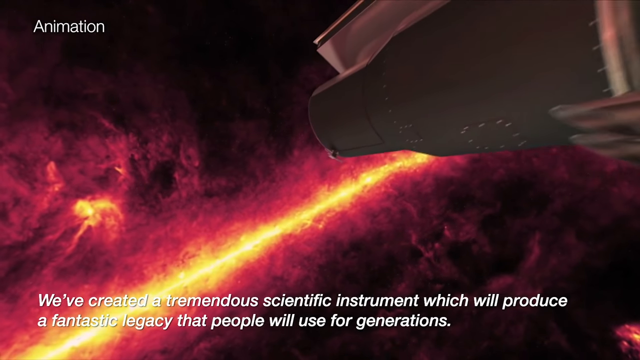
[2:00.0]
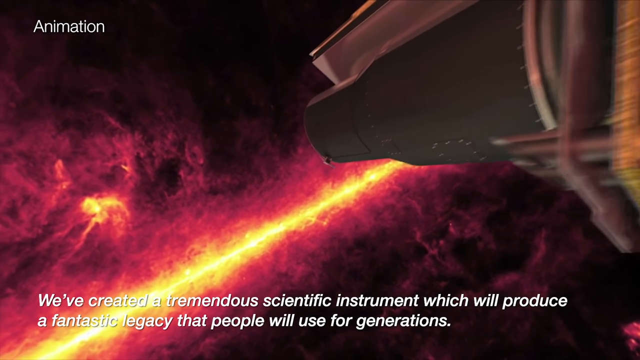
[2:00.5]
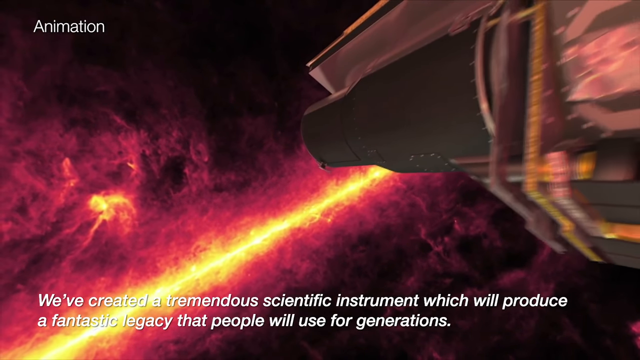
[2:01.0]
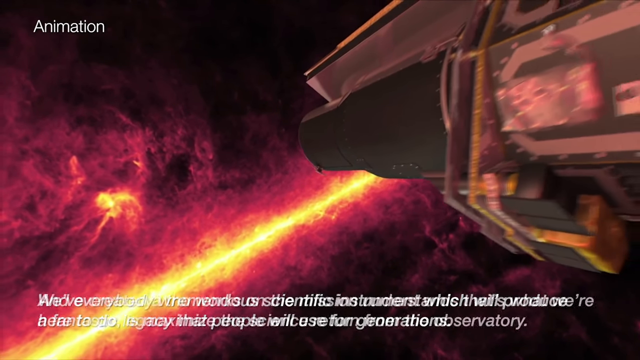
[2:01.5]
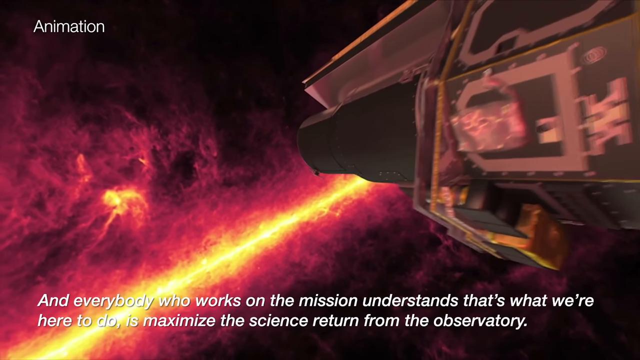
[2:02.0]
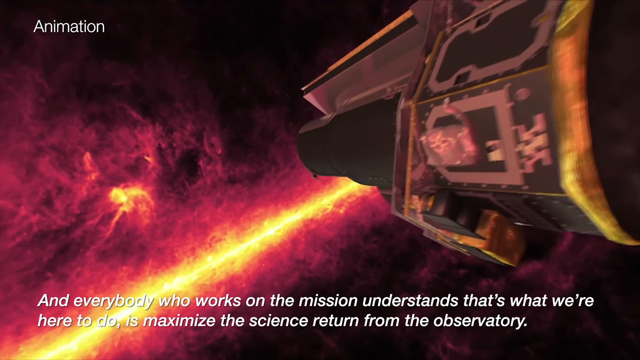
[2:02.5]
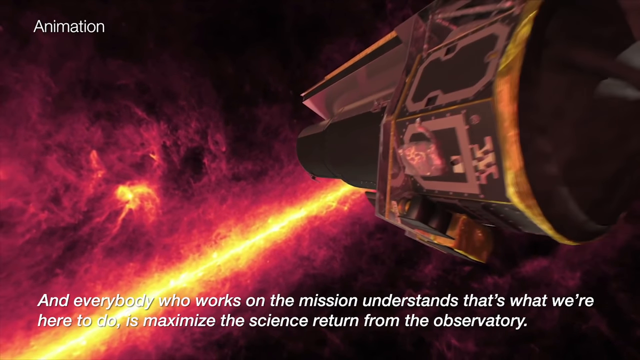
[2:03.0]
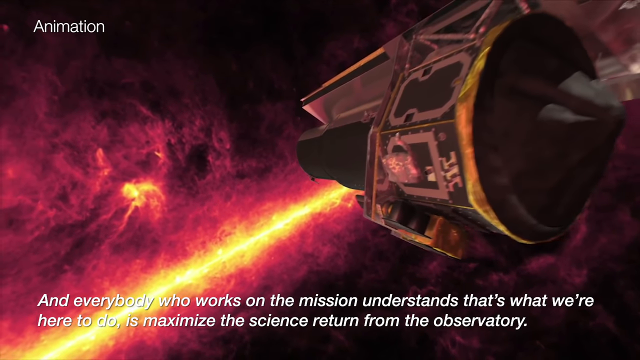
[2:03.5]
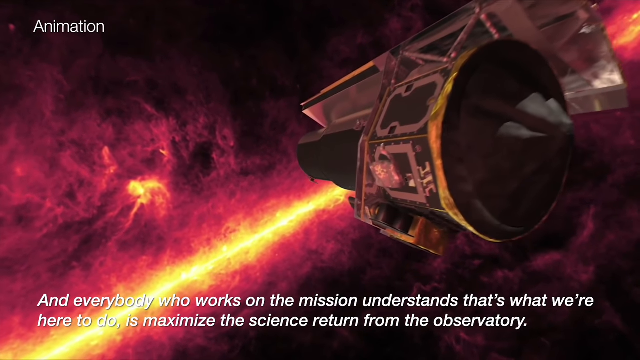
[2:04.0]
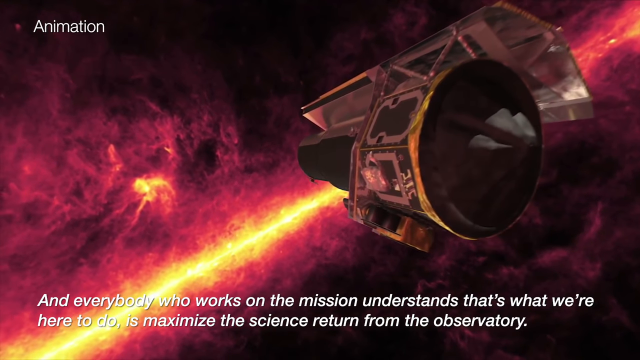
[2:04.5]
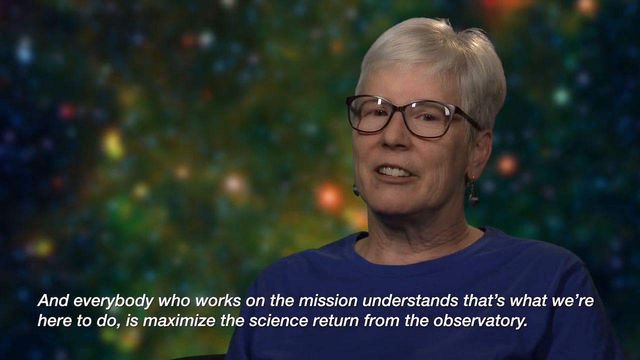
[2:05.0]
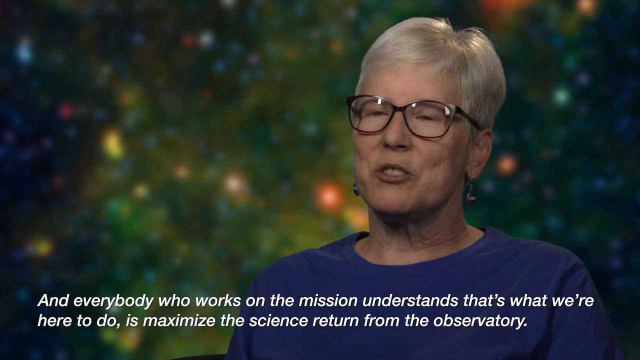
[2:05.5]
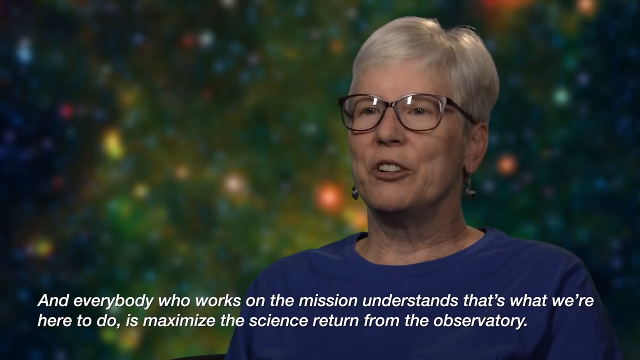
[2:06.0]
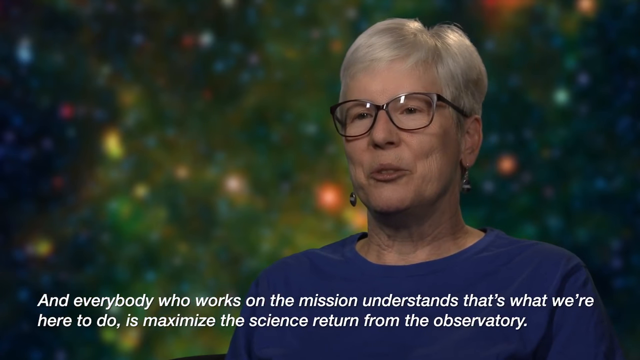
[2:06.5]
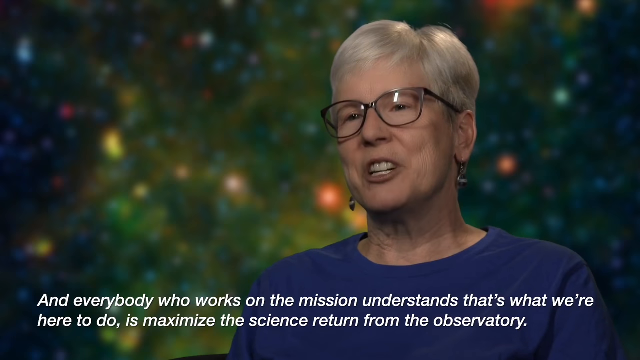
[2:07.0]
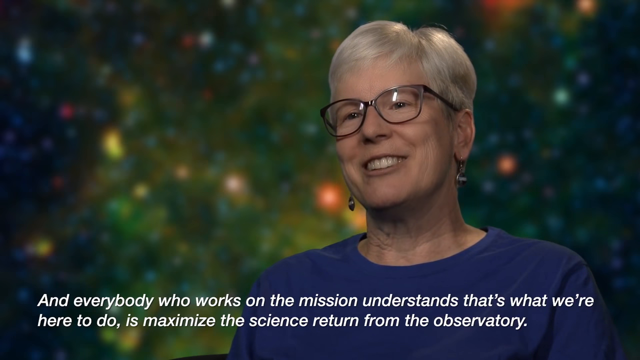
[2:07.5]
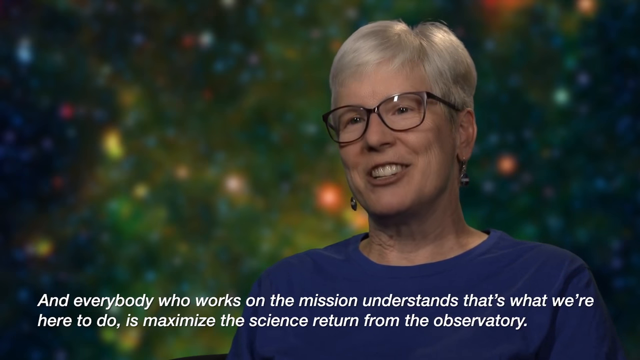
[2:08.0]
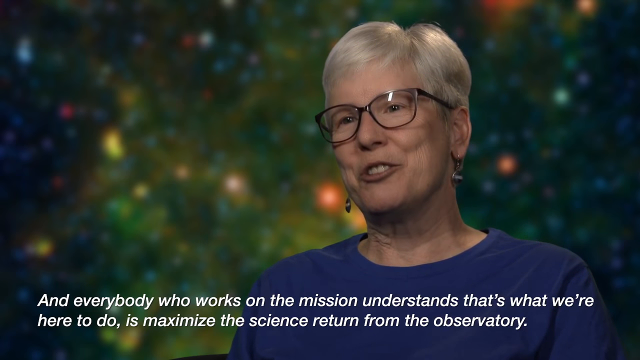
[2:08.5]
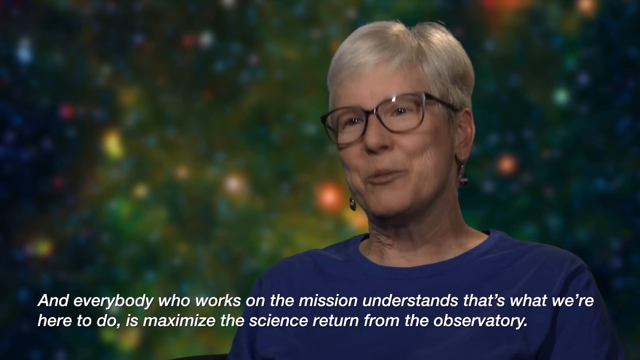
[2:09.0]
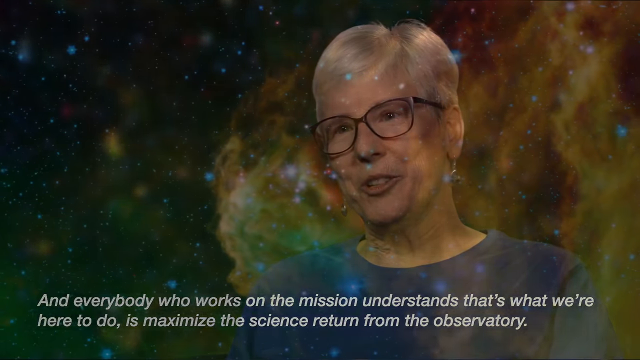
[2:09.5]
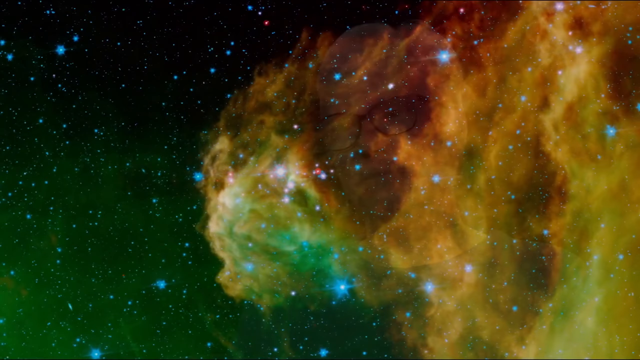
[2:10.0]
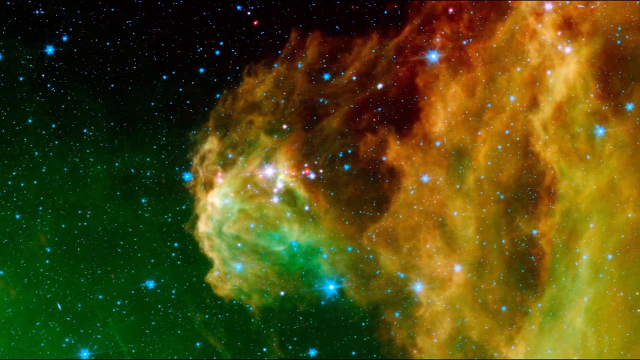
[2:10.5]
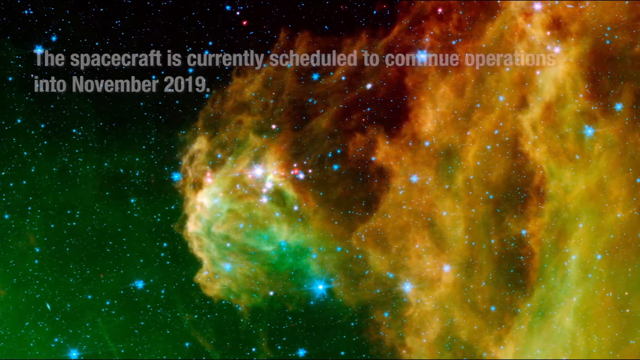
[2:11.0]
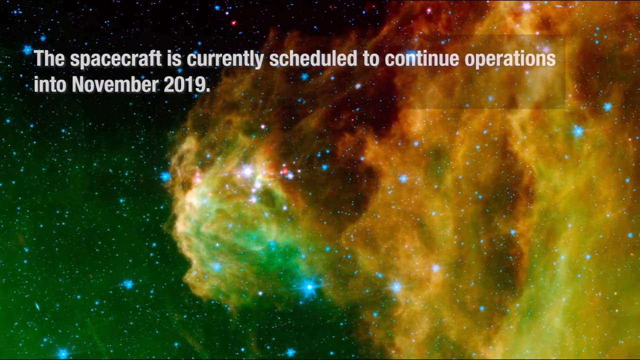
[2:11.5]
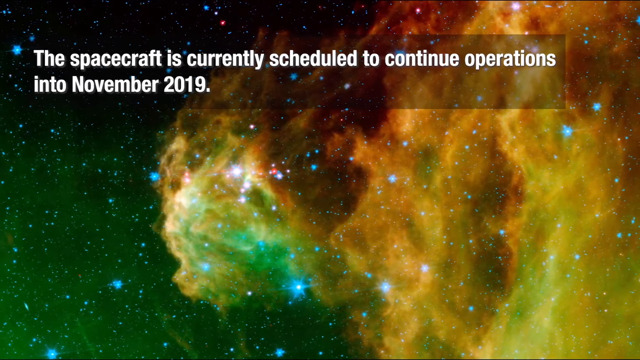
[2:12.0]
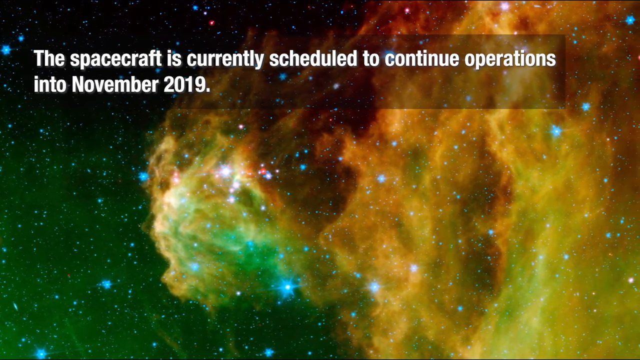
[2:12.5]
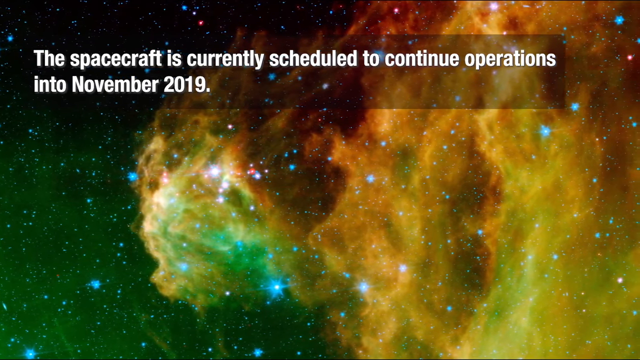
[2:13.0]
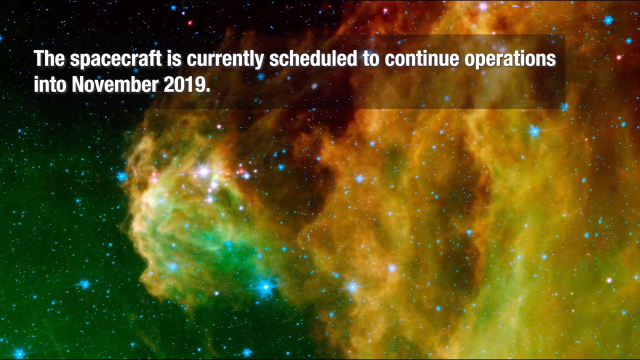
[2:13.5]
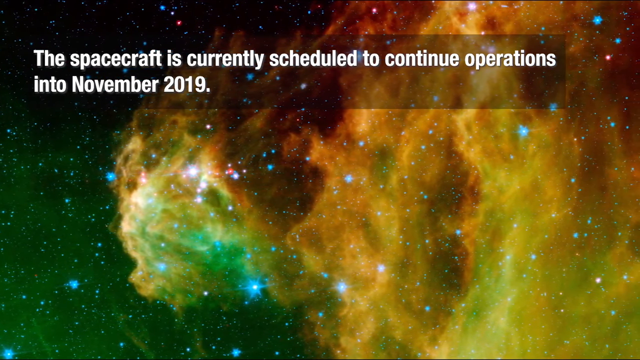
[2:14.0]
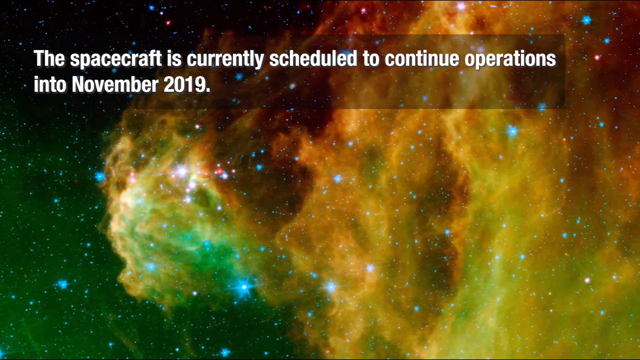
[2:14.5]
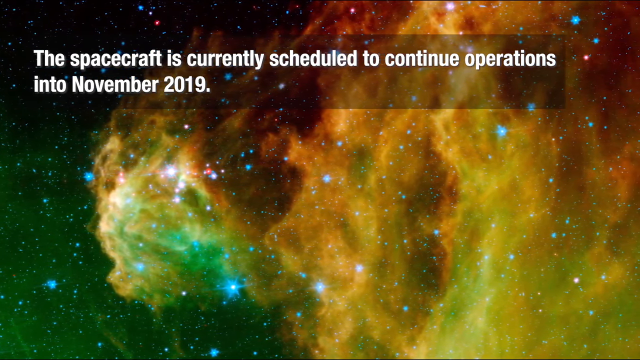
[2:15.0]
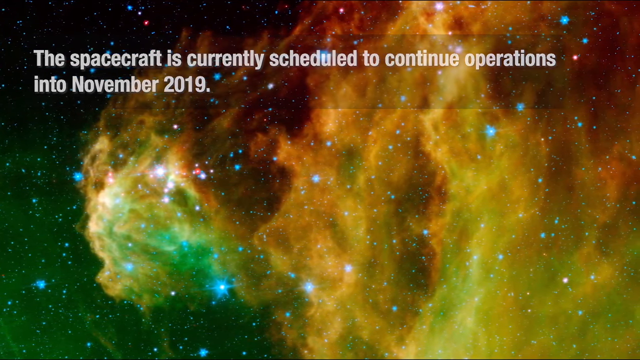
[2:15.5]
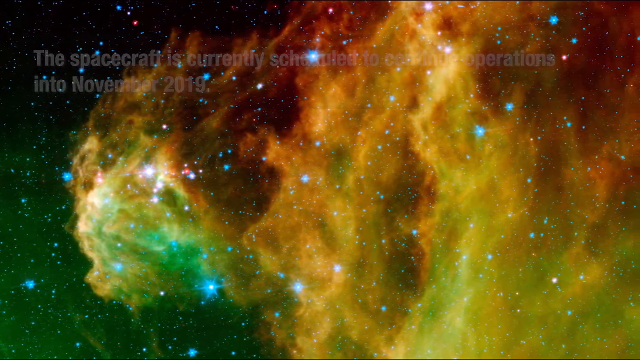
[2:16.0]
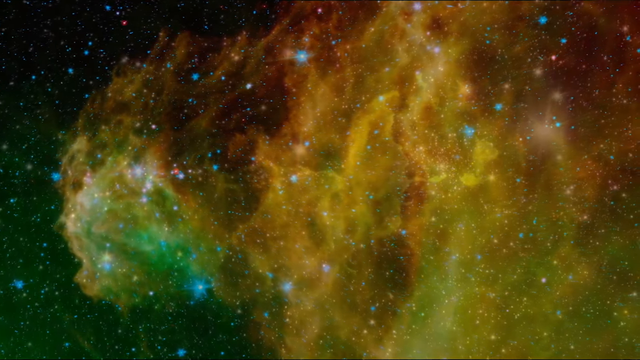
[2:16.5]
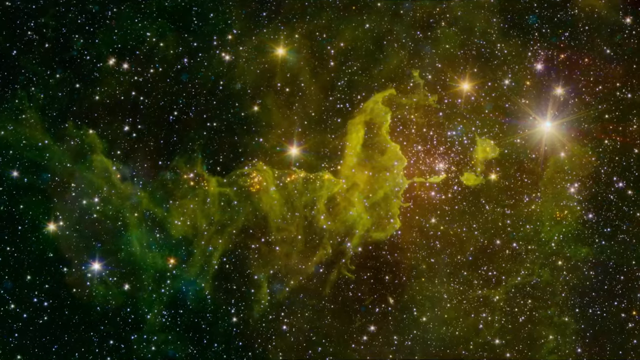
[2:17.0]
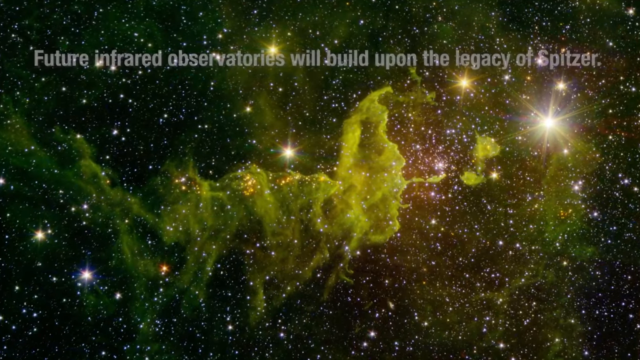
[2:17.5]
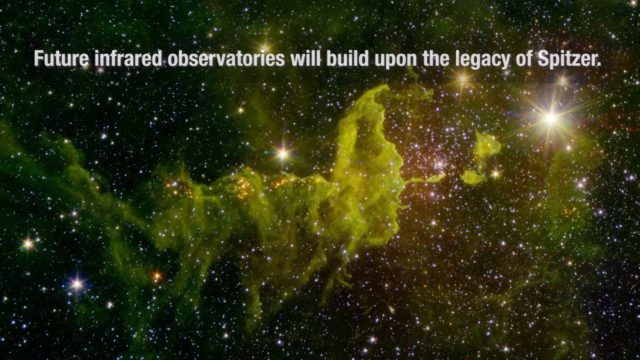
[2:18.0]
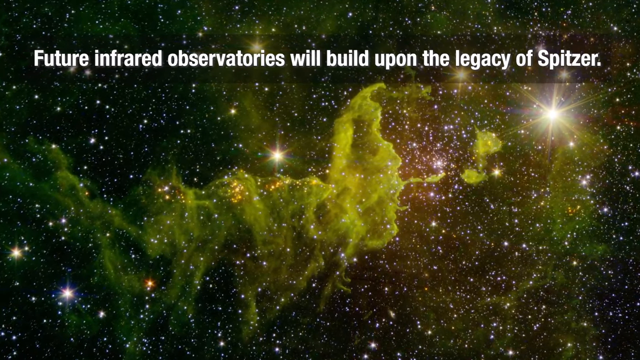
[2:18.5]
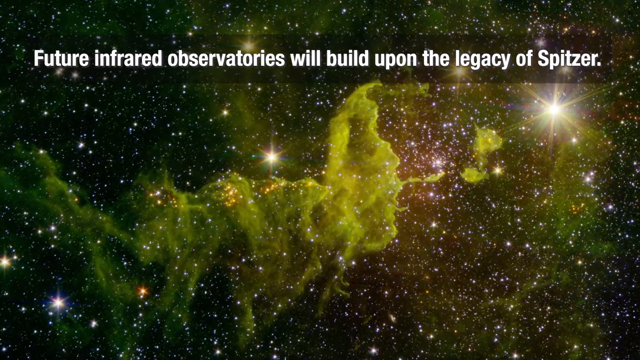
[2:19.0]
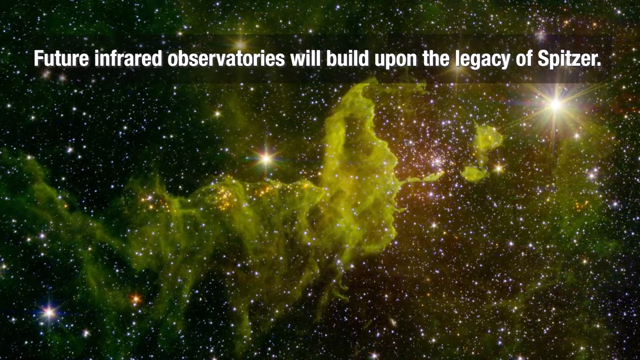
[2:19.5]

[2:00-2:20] A computer-generated animation shows very dark outer space with red and something like an orange trail of unclear nature, possibly stars. An object that looks like a large telescope comes into view in the upper right corner and kind of floats forward. The video then changes to a seated woman wearing glasses who speaks directly into the camera, smiling. She bobs her head up and down as she talks but does not really move her upper body, and she is visible only from the chest up. Then the video returns to a computer-generated animation of outer space showing some kind of galaxy that is very yellow, very green and very burnt orange, with a bunch of little twinkling blue and white stars. The camera pans to the right, showing the full extent of the galaxy both up close and far away.